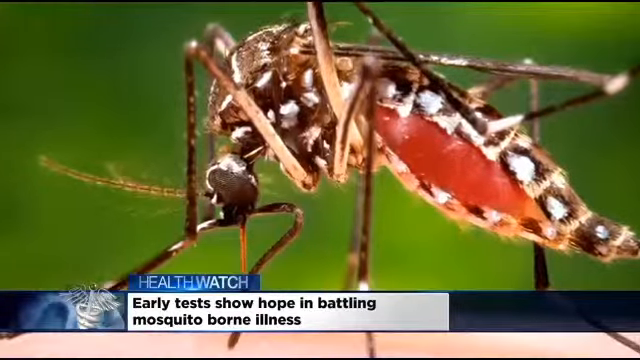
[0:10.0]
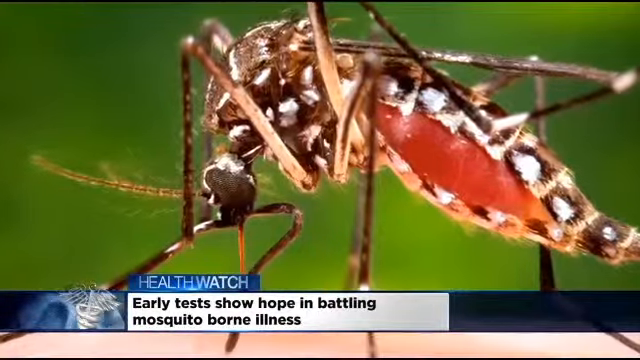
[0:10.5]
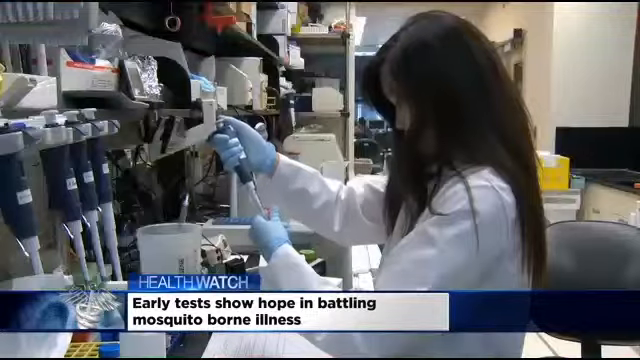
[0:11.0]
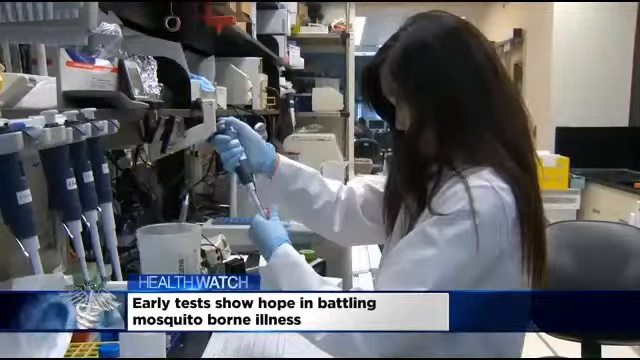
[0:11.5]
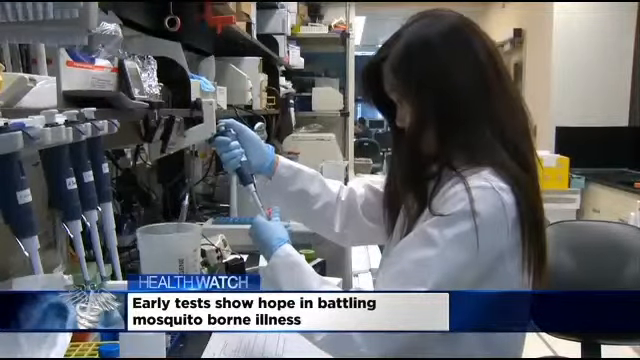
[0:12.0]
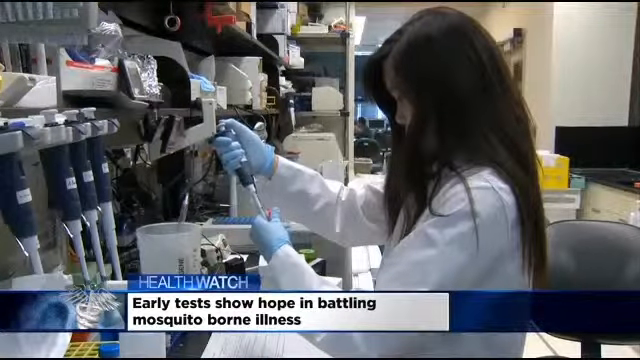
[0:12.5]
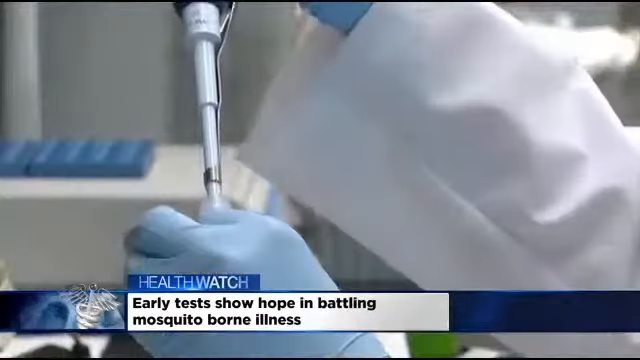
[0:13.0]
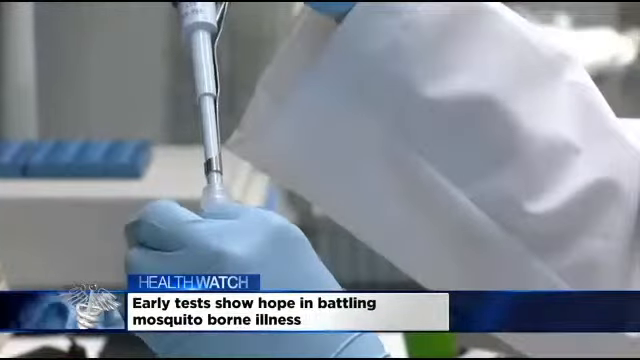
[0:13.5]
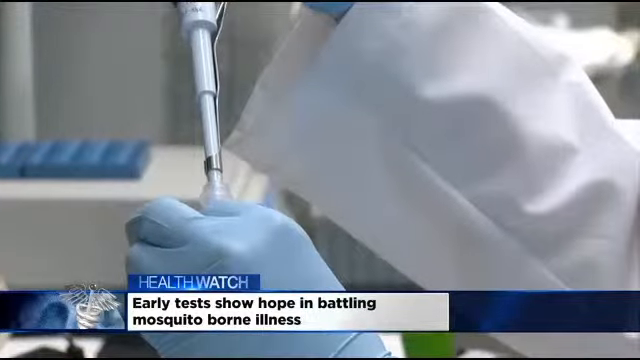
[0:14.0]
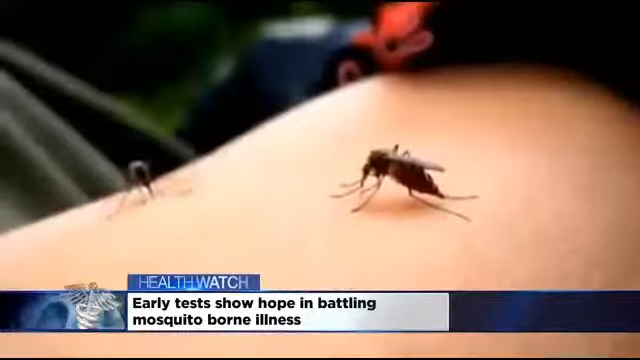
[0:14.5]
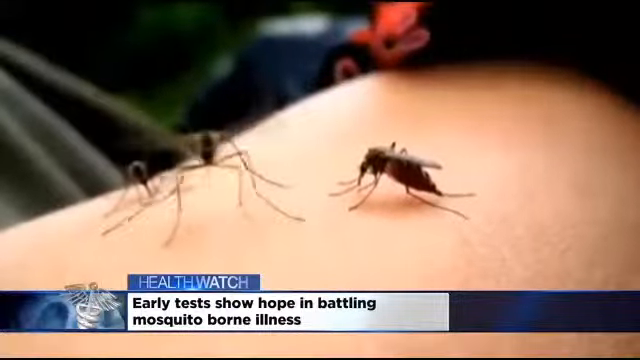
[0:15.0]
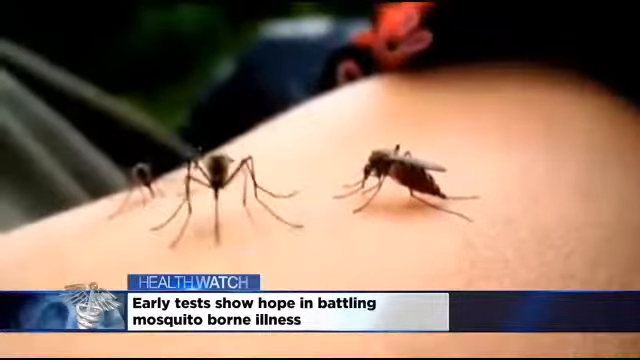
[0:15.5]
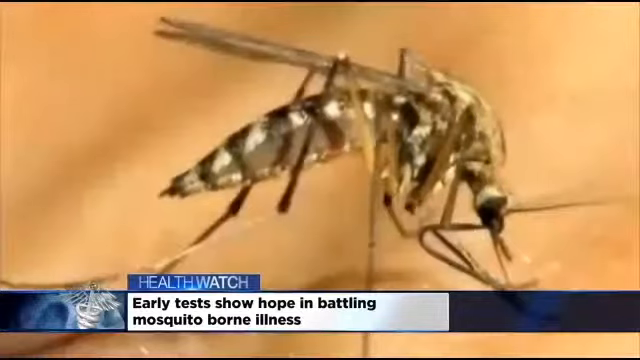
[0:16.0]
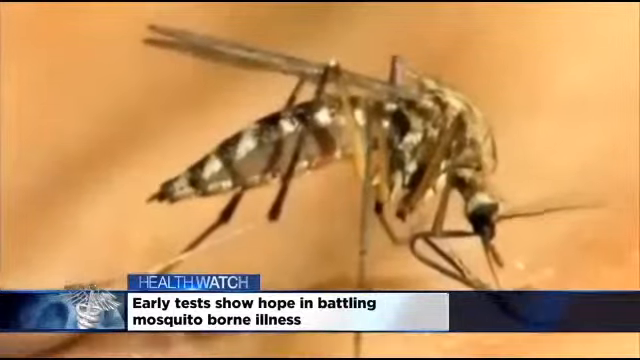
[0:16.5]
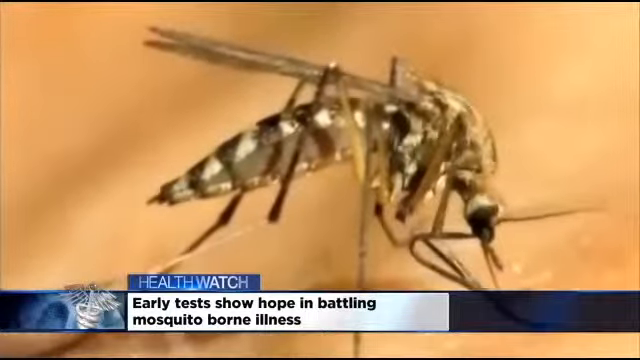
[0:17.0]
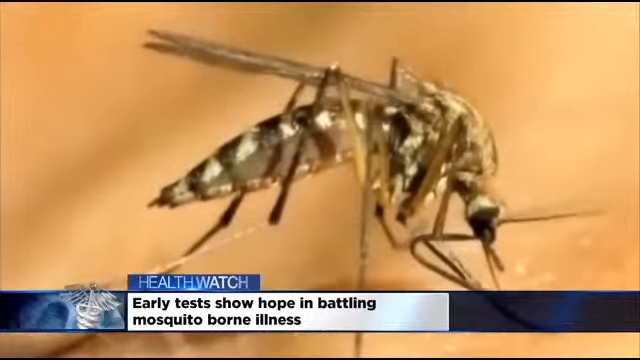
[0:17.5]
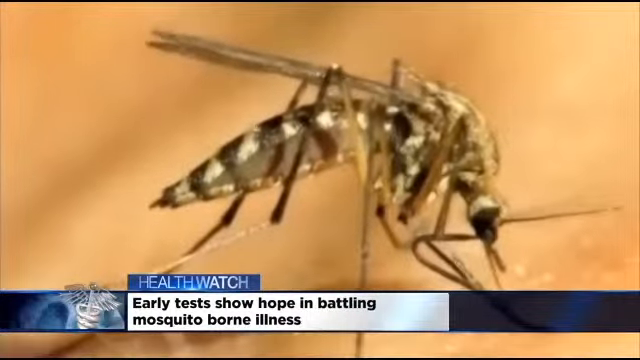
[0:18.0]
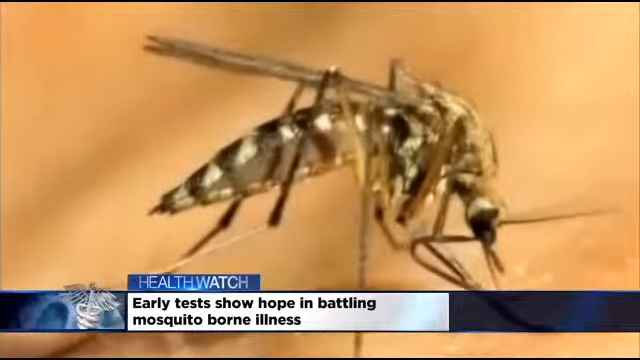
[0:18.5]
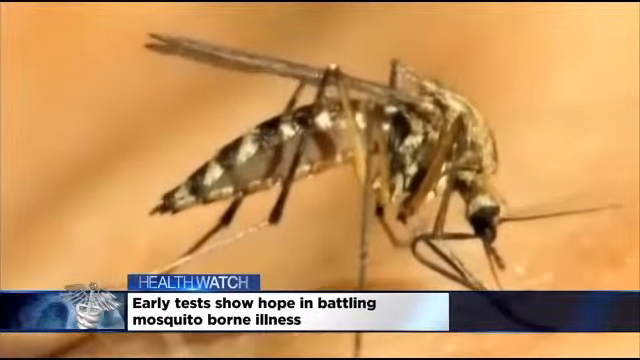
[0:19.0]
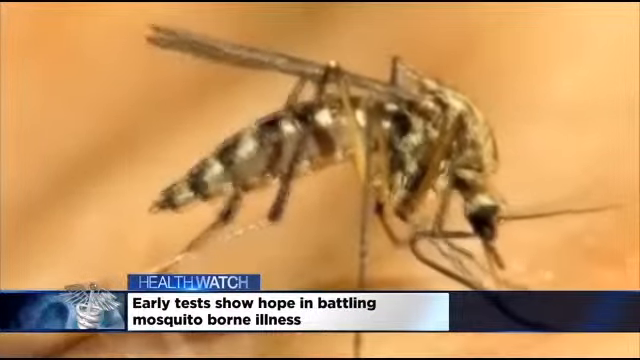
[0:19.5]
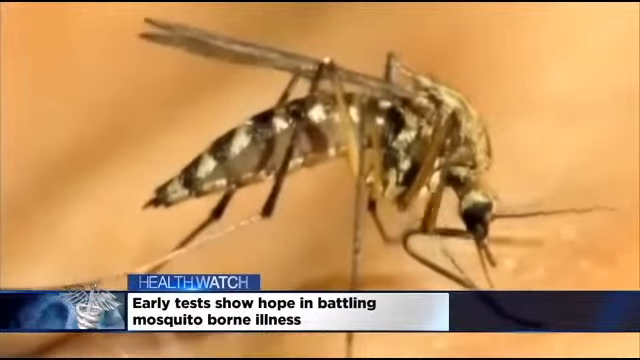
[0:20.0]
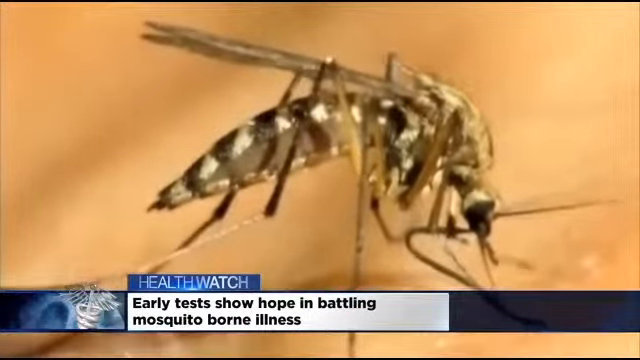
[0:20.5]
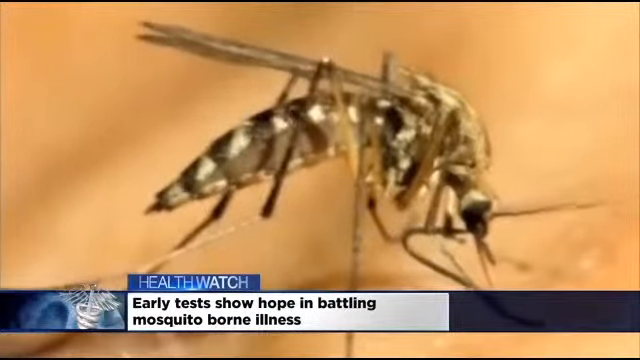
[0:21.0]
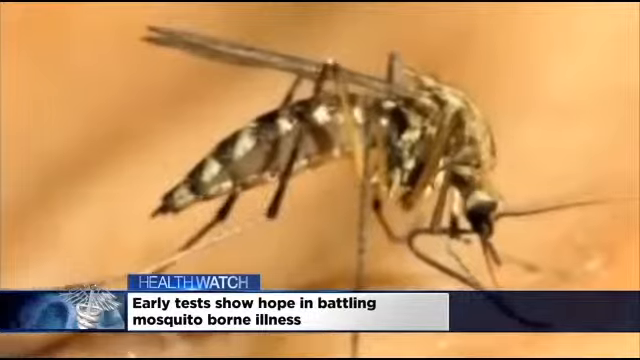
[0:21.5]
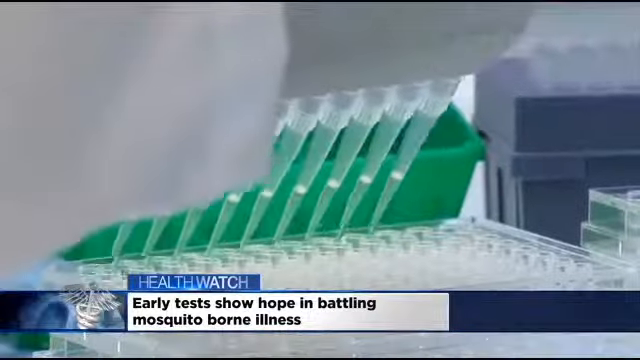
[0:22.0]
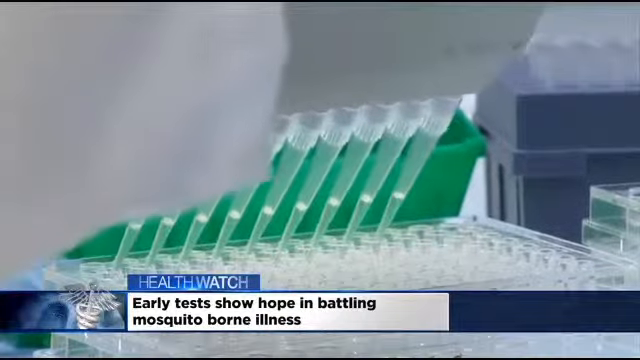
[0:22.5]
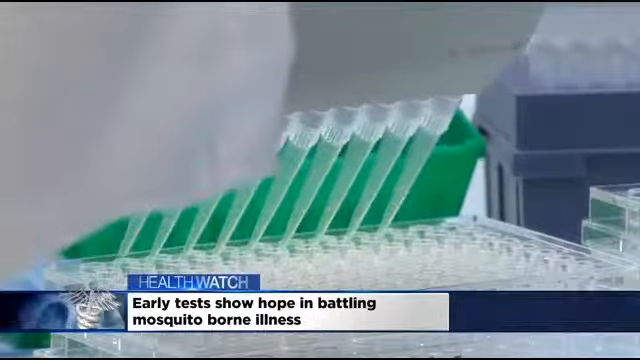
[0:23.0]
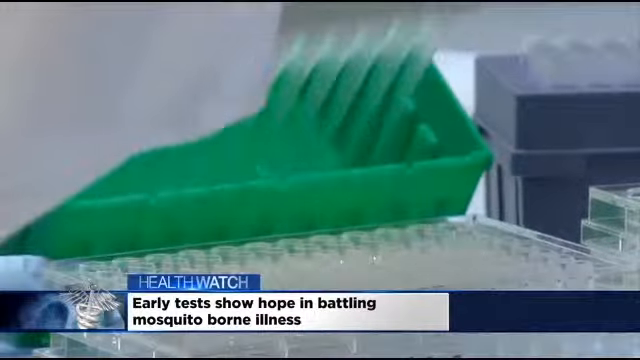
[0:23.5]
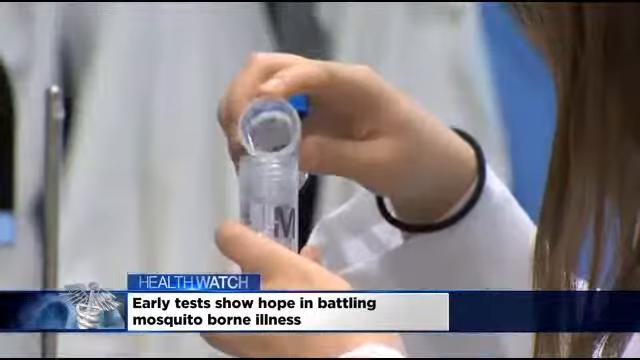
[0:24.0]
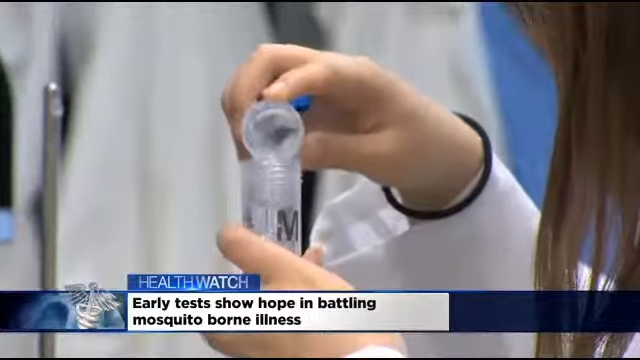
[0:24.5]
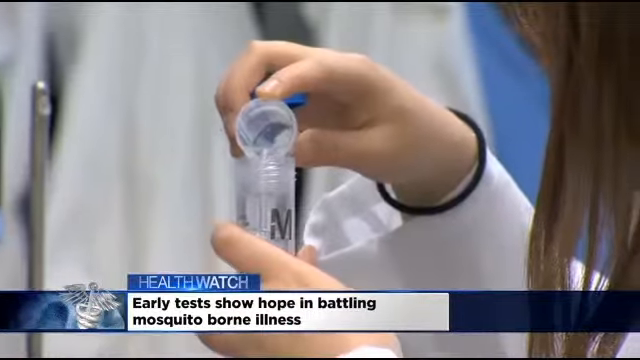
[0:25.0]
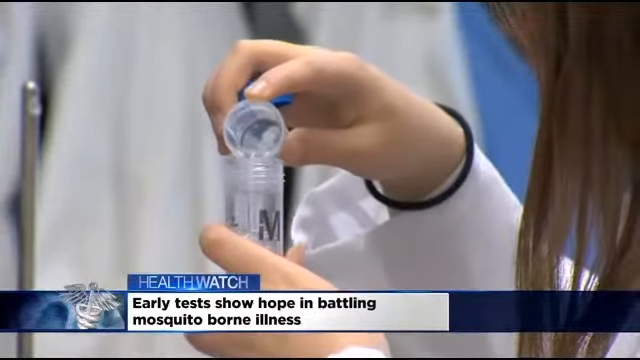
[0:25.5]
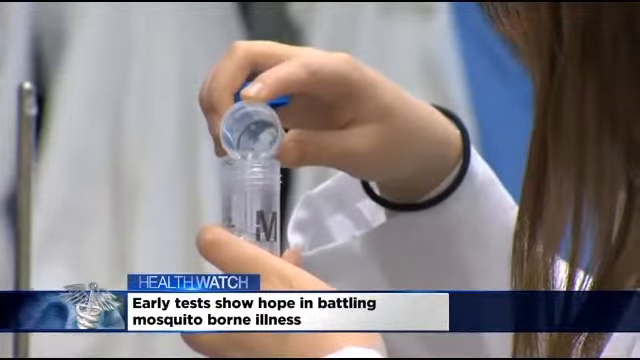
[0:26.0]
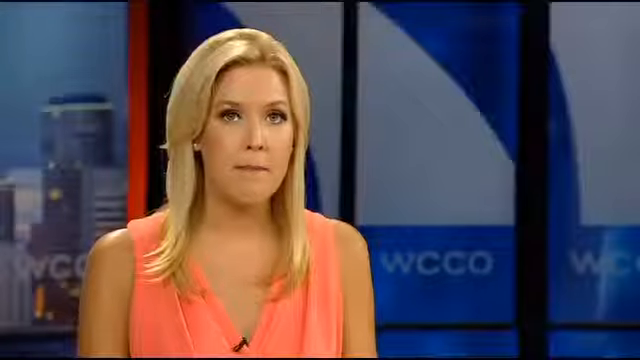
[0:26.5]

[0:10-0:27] Against a mixed green background, a close-up picture of a mosquito appears. It looks mutated, and the whole side of its back end looks busted open, with something inside that kind of looks like meat. Text reads "early tests show hope in battling mosquito-borne illness." The view pans in and moves to a lab, where an Oriental woman uses a syringe to squirt something into a vial. Next, a person is shown with a mosquito on them, biting them, and there are multiple mosquitoes. Back in the lab, a couple of people fill what are probably vaccines into vials, and a bunch of syringes shoot vaccines into multiple vials. Both people look Oriental and wear lab coats; the woman has dark black hair and wears a black friendship bracelet on her right wrist. The scene switches to the microscope, where the man is wearing gloves; they all wear sky blue gloves. A person's leg is shown as three mosquitoes land on it, followed by a mosquito on someone's skin that looks like it is biting them.